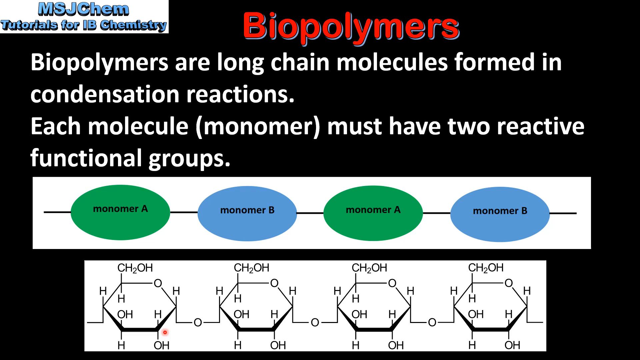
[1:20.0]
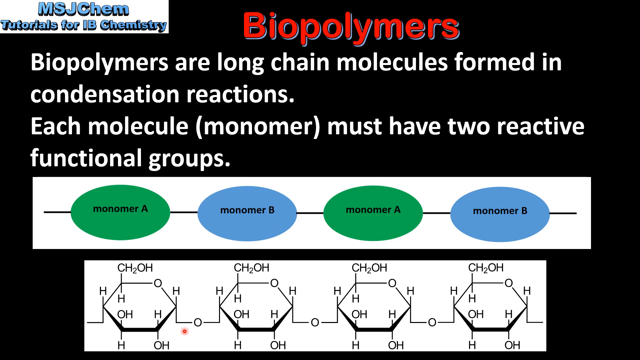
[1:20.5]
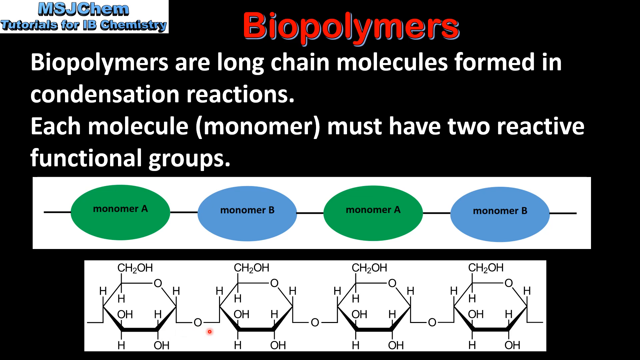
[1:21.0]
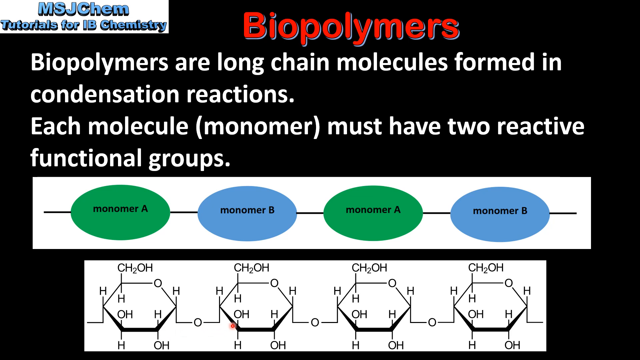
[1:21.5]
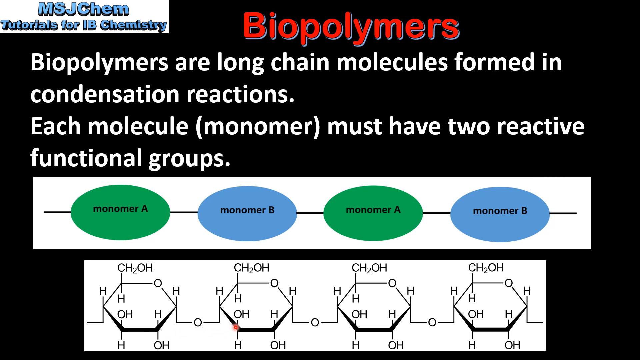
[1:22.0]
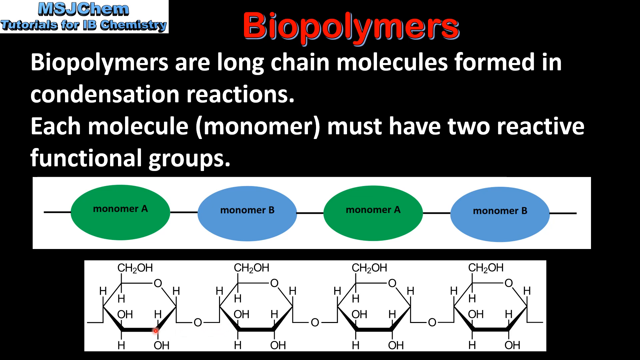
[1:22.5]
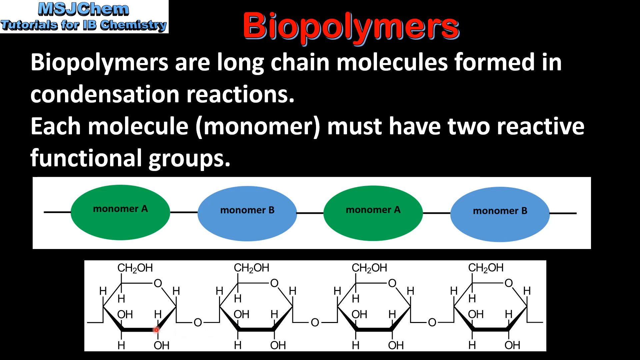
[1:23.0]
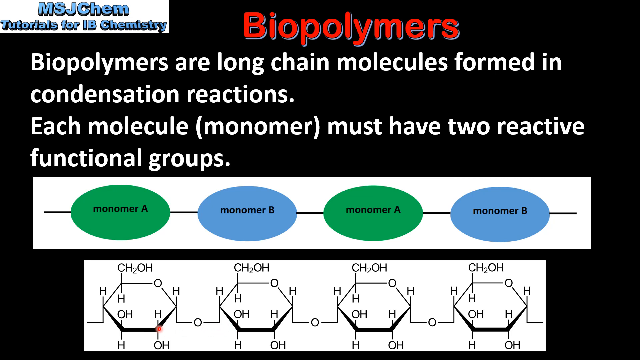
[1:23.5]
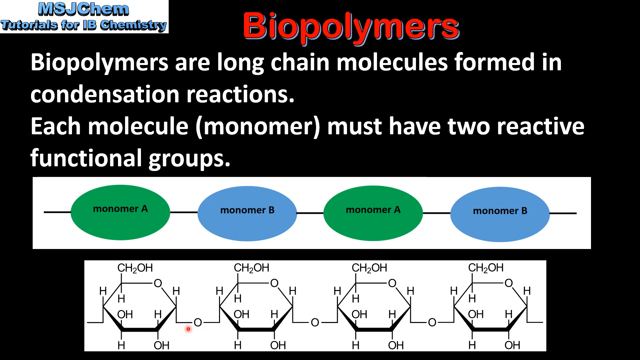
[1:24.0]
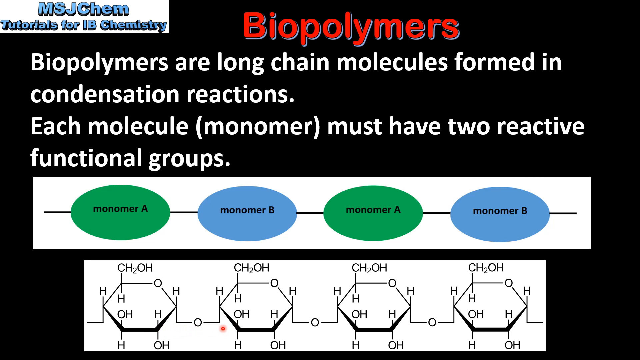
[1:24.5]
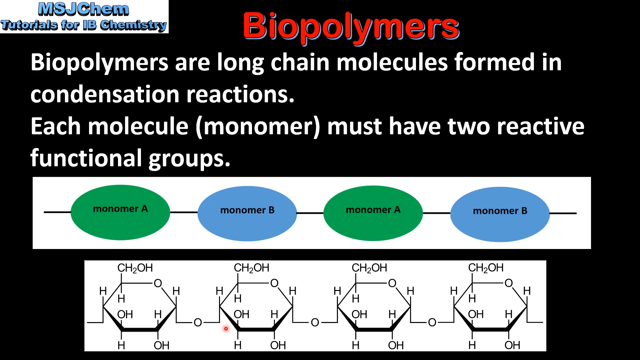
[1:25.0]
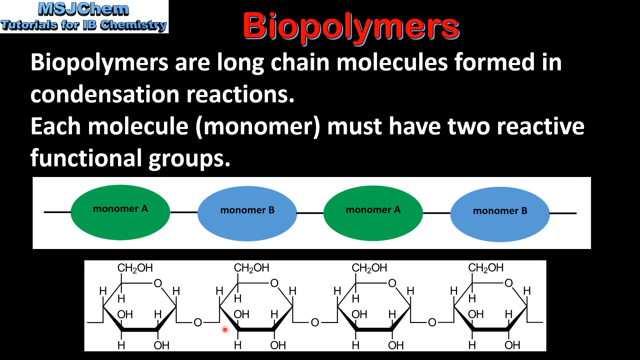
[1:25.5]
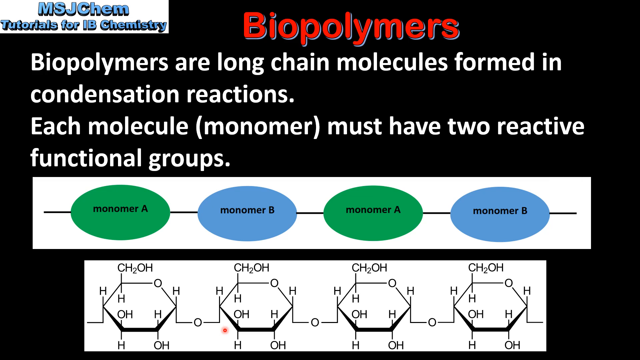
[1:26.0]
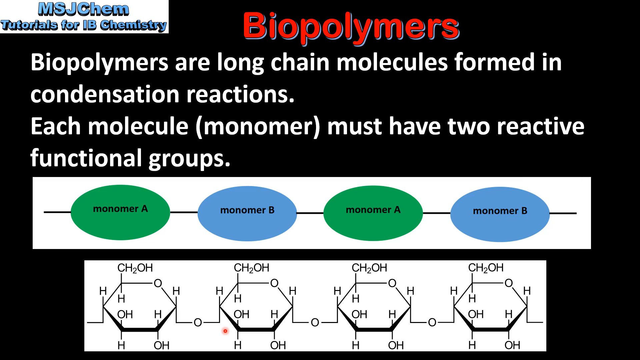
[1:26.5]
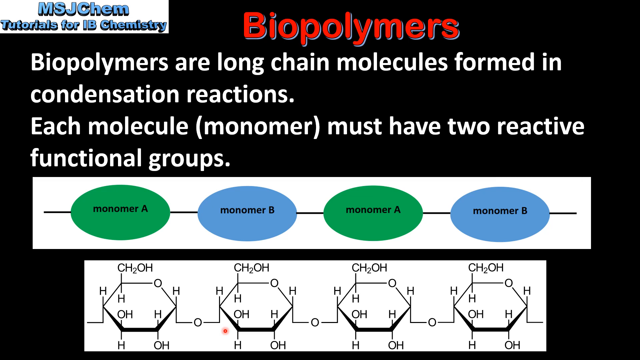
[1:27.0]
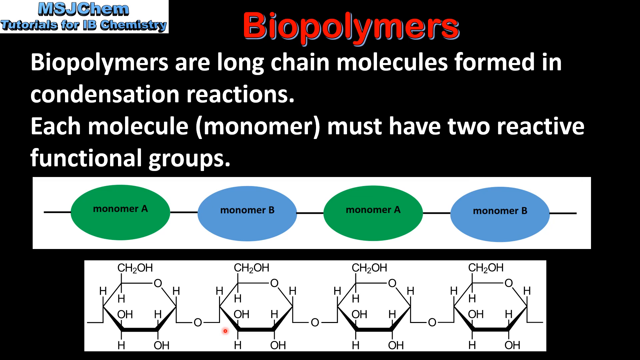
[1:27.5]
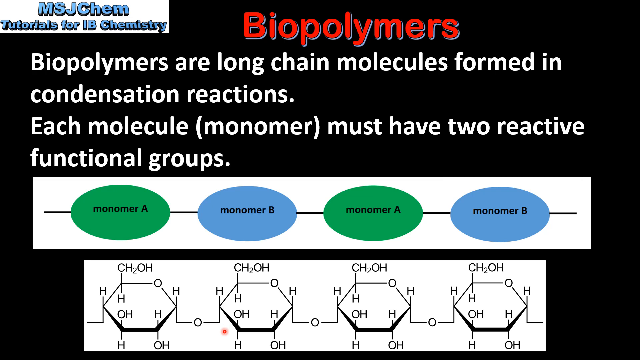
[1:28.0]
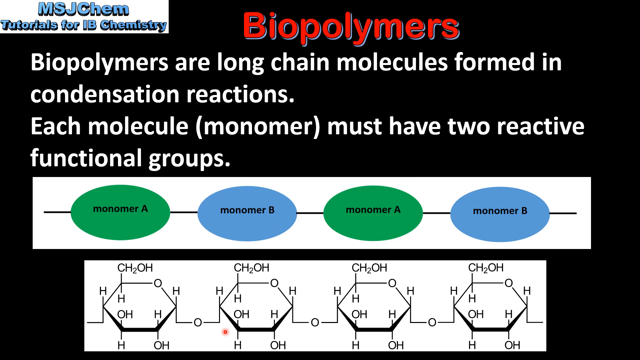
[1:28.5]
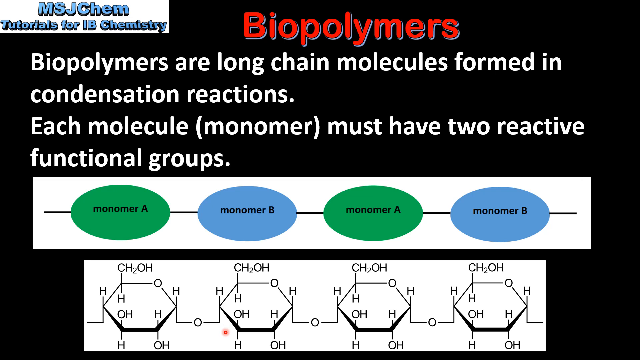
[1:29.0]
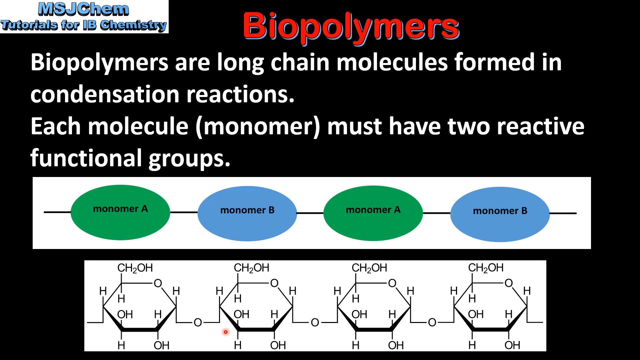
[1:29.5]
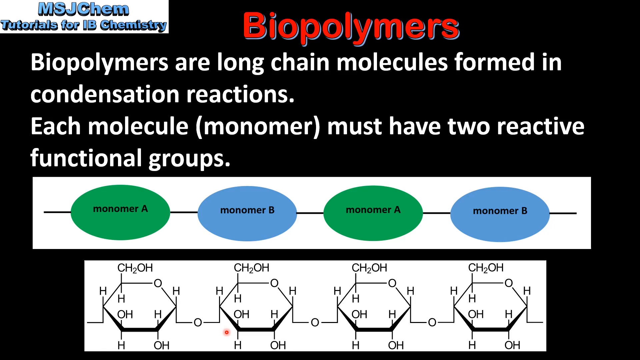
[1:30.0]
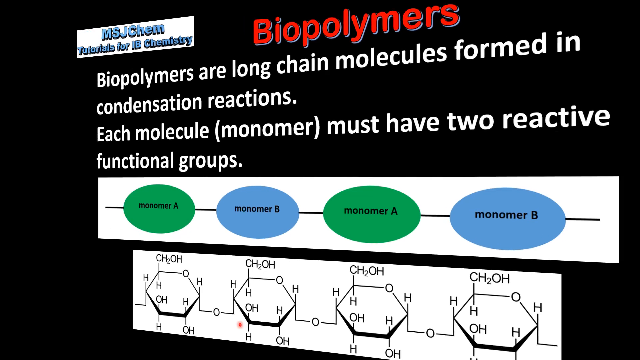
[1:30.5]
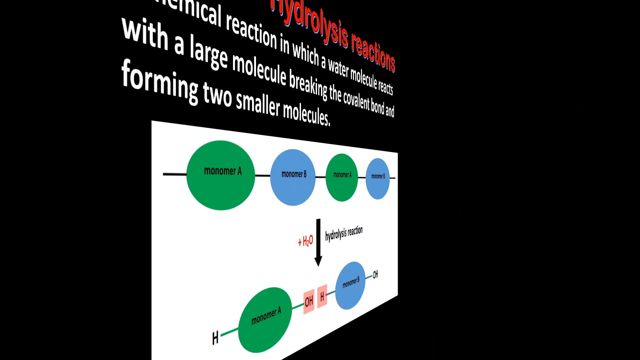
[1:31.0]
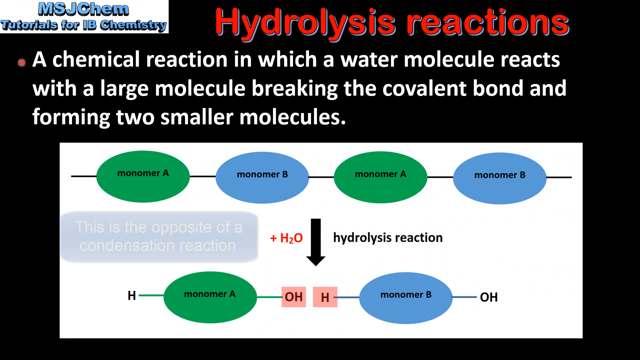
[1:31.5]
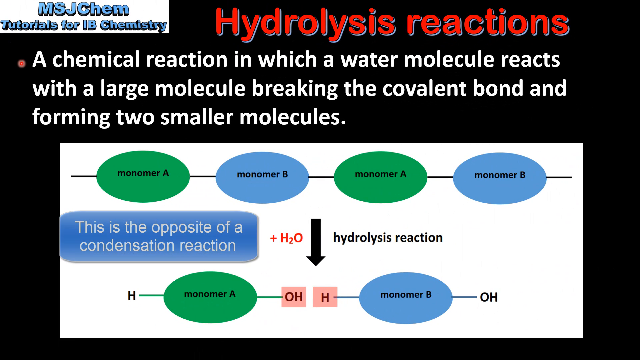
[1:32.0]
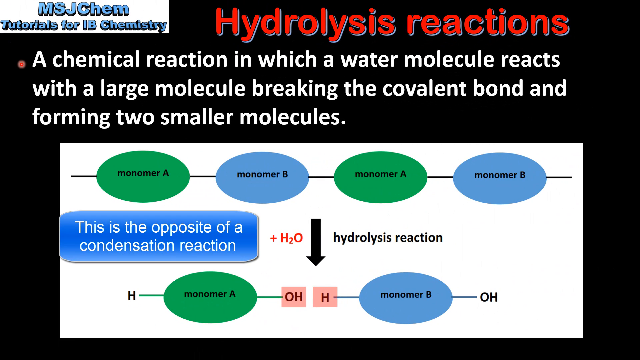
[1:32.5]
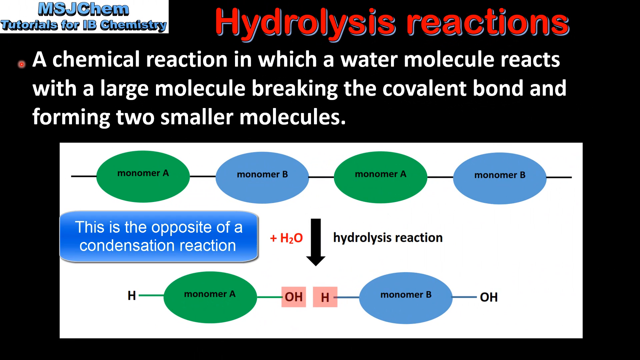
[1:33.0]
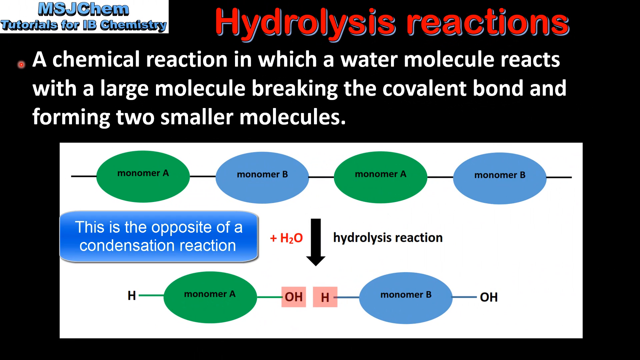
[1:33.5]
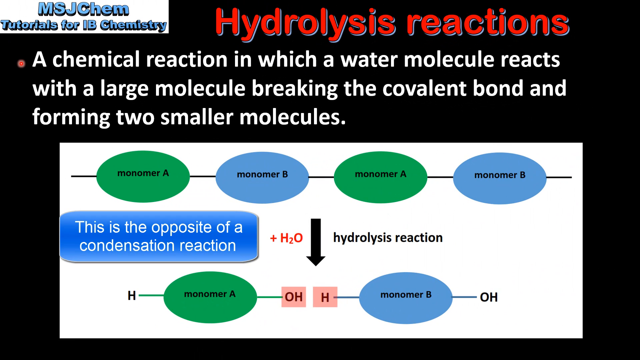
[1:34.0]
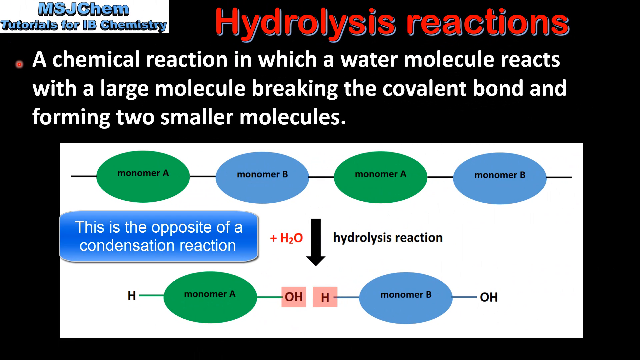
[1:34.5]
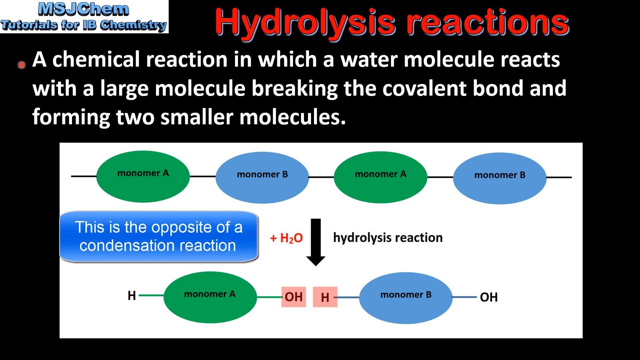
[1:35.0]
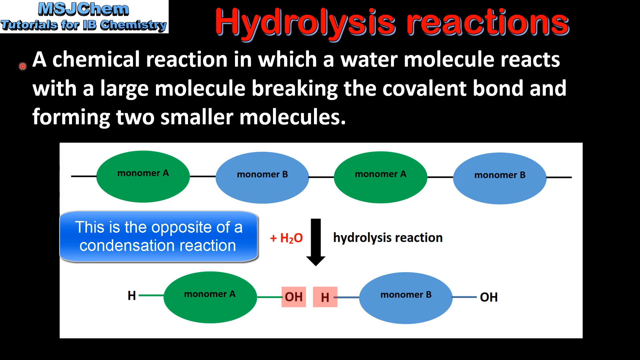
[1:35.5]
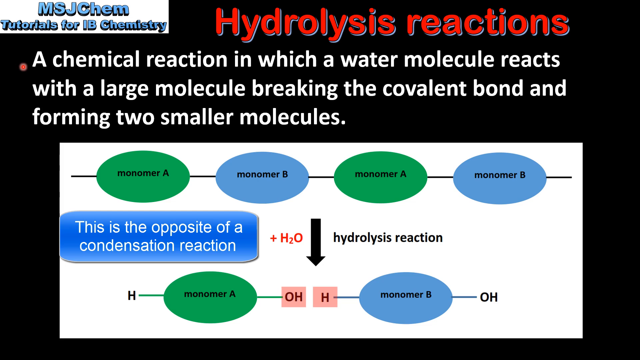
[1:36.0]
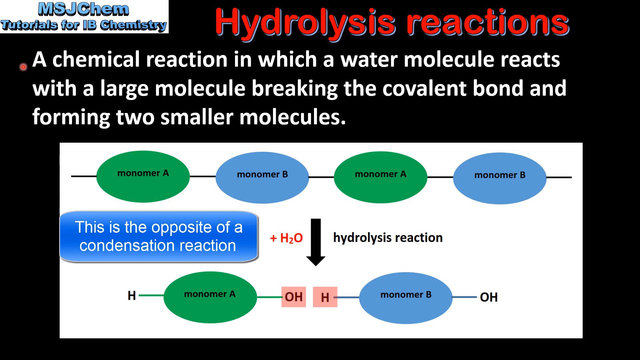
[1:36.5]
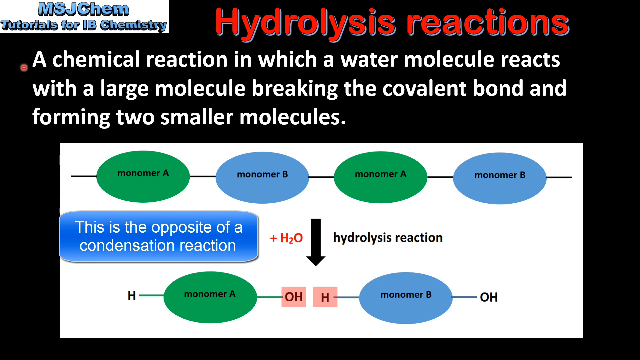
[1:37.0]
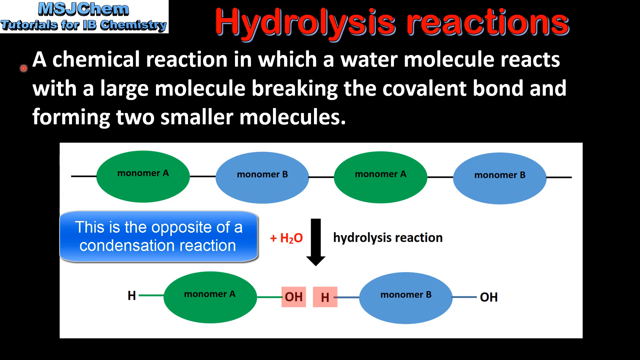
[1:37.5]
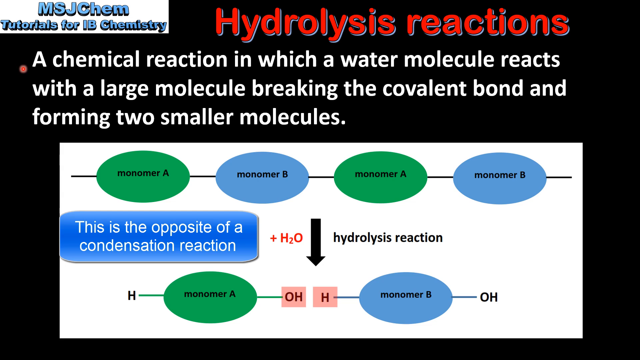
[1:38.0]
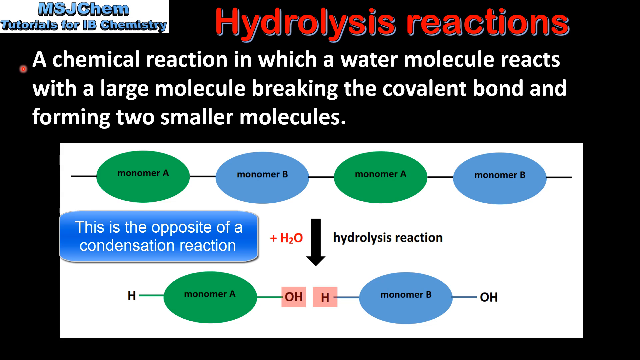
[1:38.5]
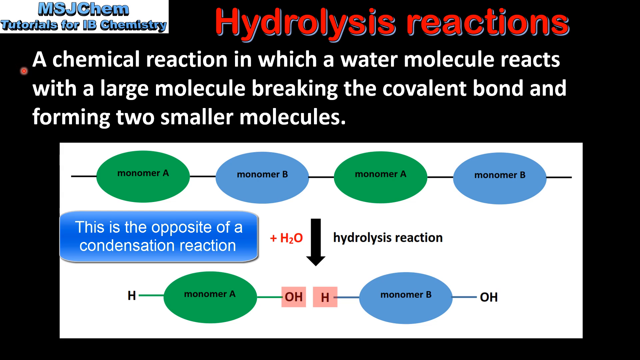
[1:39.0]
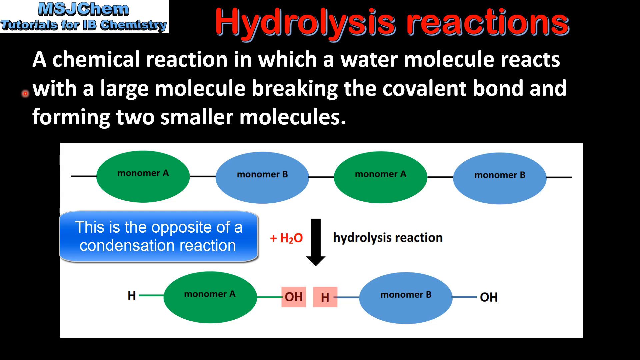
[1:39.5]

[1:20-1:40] A black background shows red text reading "biopolymers" and a small white box with blue text reading "MSJ chem tutorials for IB chemistry." A paragraph of white text reads "biopolymers are long chain molecules formed in condensation reactions. Each molecule monomer must have two reactive functional groups." A very elongated white box has blue and green circles labeled in black text "monomer A," "monomer B," "monomer A," and "monomer B," with a black line connecting all the circles. Another white box at the bottom has black text repeating throughout, such as "CH2OH," "HHOH," "HOH," and "HOH." A small red cursor moves and points to different elements of the page. Another screen follows: a black background with red text reading "hydrolysis reactions," a small white banner at the top left corner reading "MSJ chem tutorials for IB chemistry," and a white paragraph reading "a chemical reaction in which a water molecule reacts with a large molecule breaking the covalent bond and forming two smaller molecules." A very large white box contains green and blue circles labeled in black text "monomer A, monomer B, monomer A, monomer B," and another set at the bottom labeled "monomer A, monomer B." A small black arrow points down to pink boxes of text reading "OH" and "H." A blue box with white text reads "this is the opposite of a condensation reaction," red text reads "plus H2O," and the black arrow is labeled "hydrolysis reaction." The small red mouse pointer is on the screen.